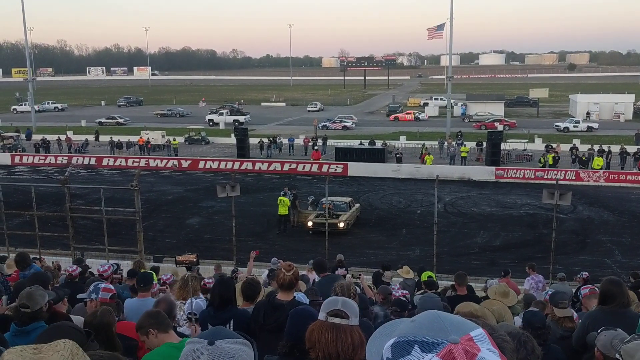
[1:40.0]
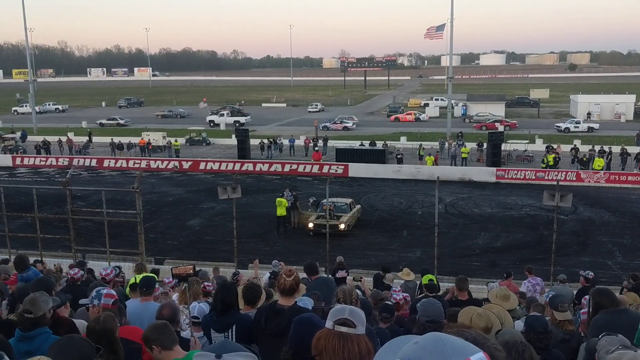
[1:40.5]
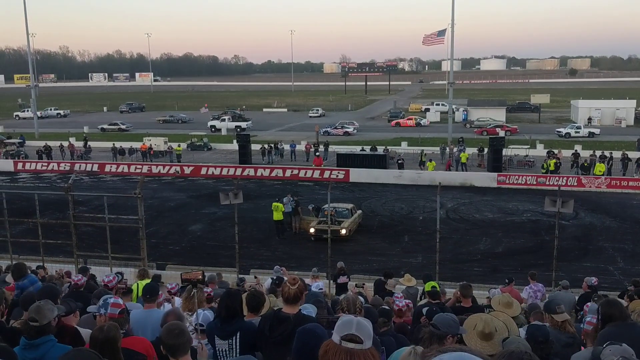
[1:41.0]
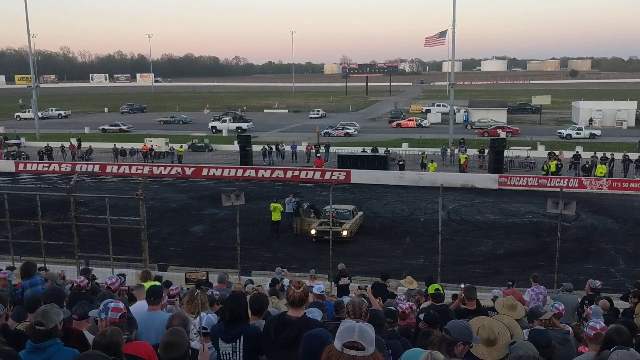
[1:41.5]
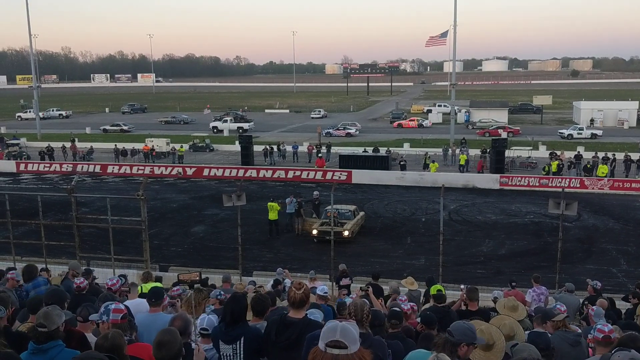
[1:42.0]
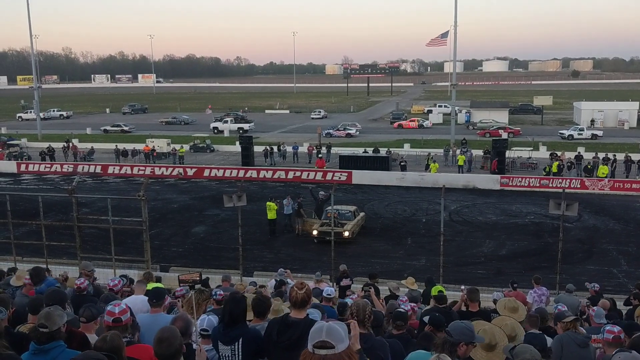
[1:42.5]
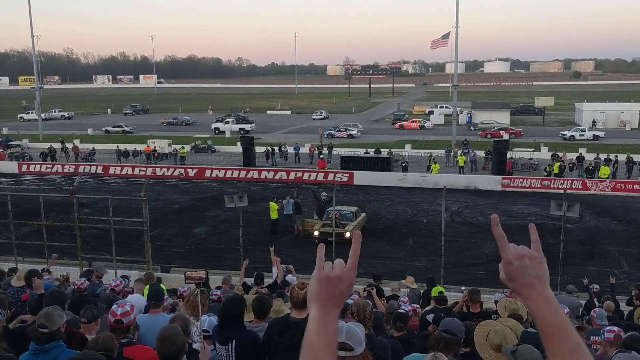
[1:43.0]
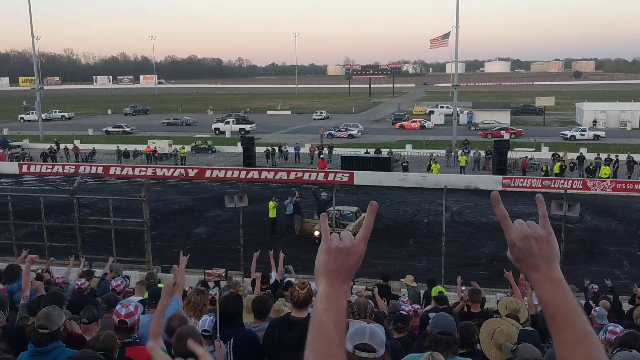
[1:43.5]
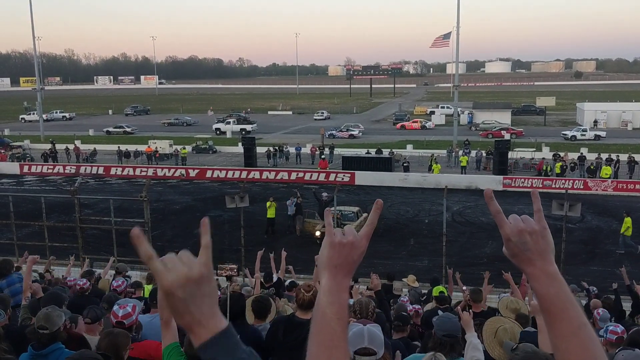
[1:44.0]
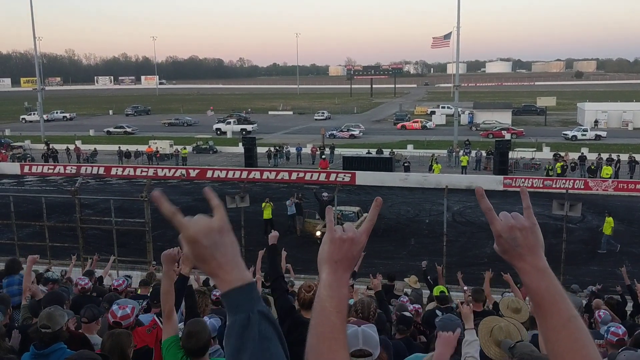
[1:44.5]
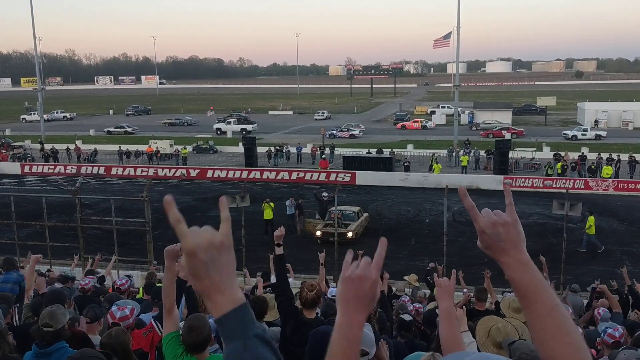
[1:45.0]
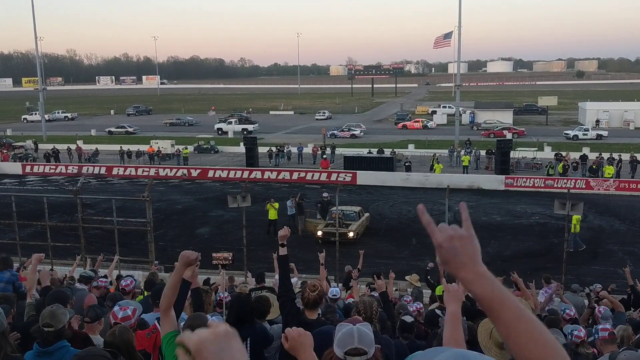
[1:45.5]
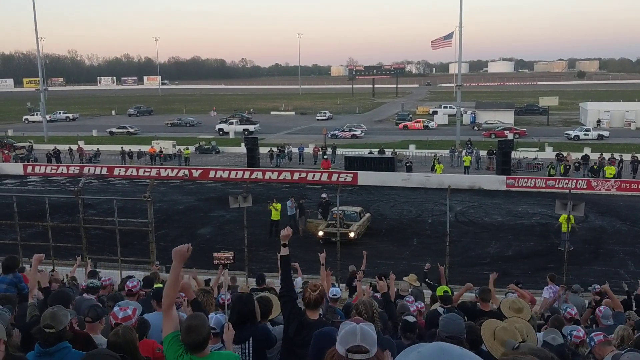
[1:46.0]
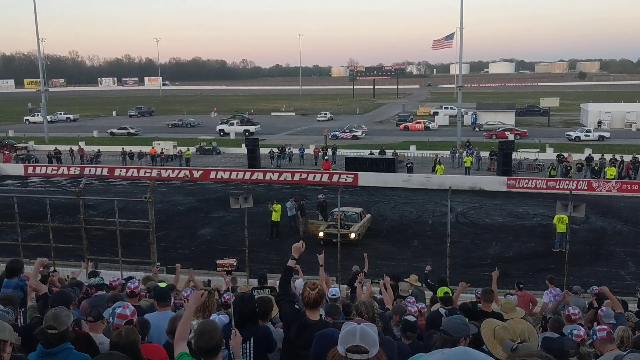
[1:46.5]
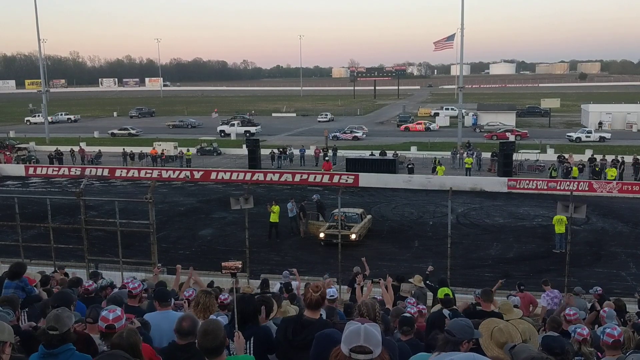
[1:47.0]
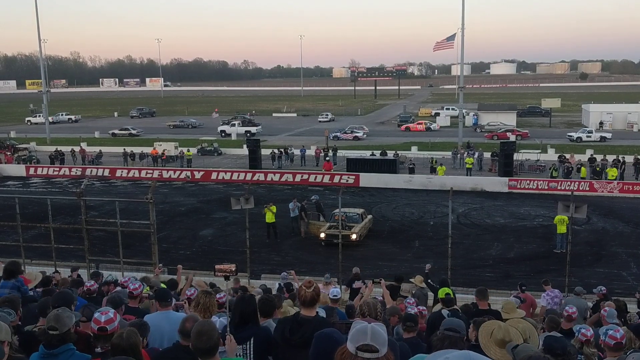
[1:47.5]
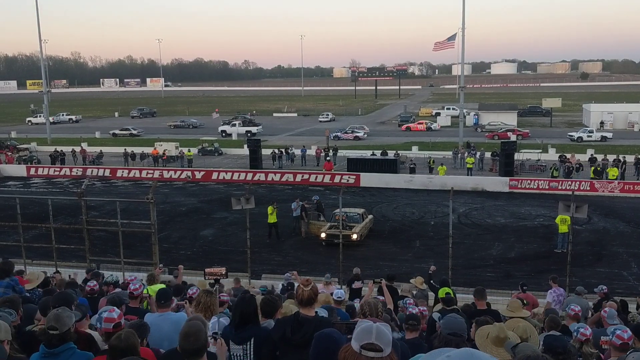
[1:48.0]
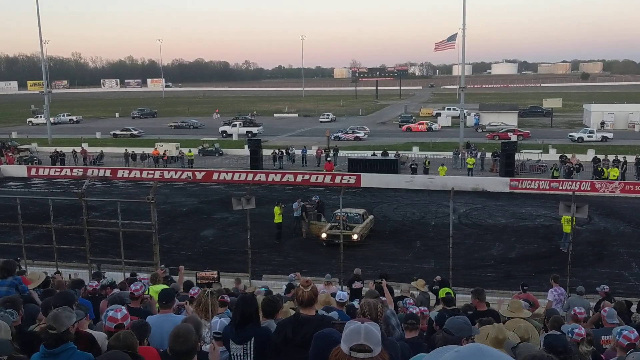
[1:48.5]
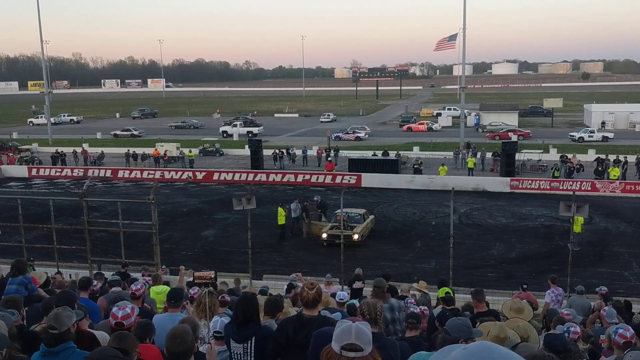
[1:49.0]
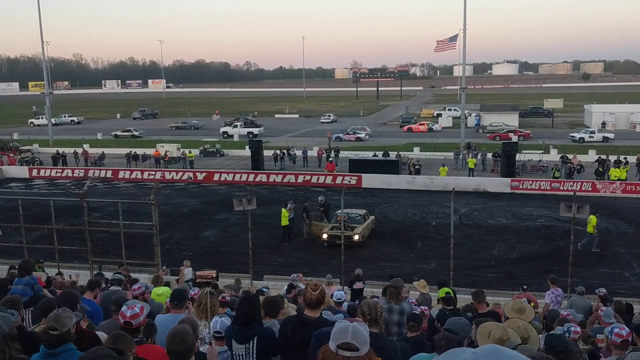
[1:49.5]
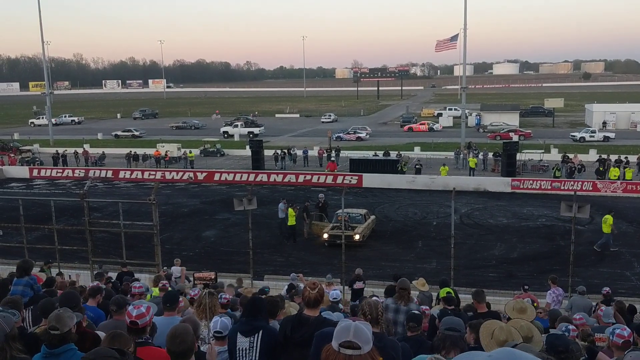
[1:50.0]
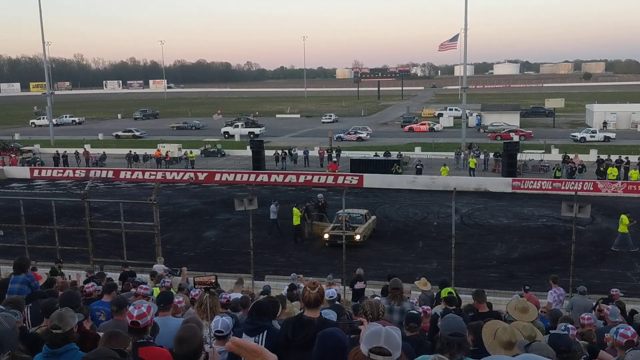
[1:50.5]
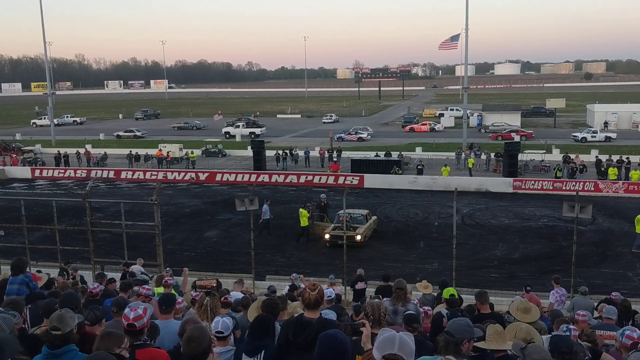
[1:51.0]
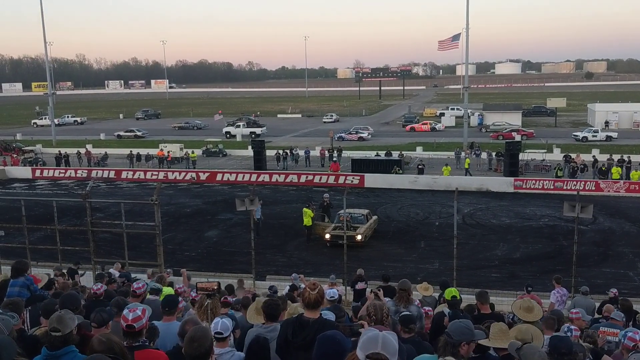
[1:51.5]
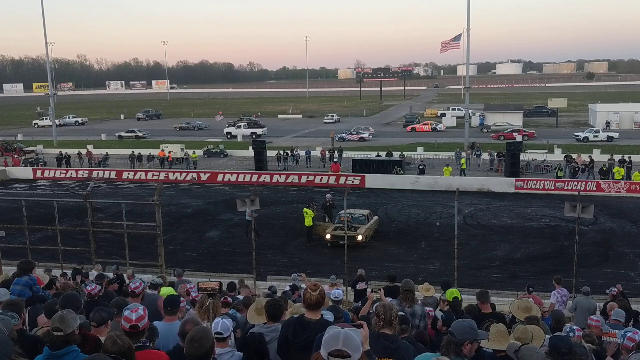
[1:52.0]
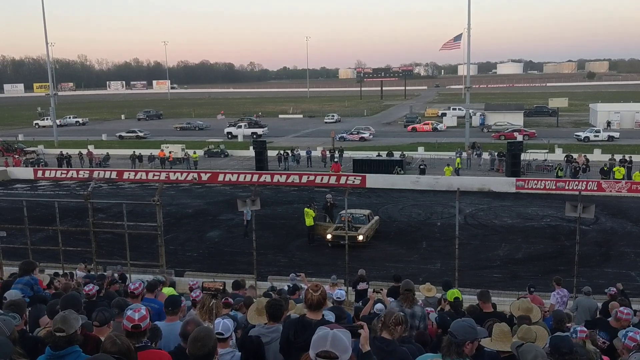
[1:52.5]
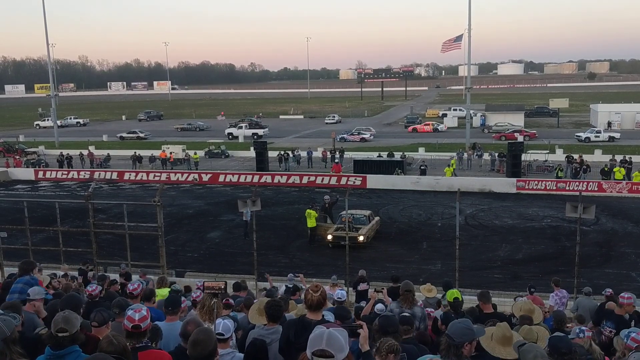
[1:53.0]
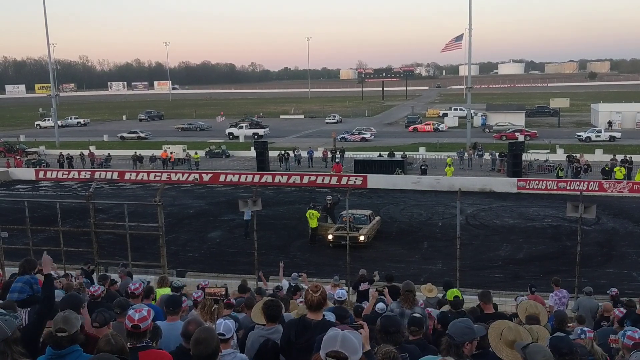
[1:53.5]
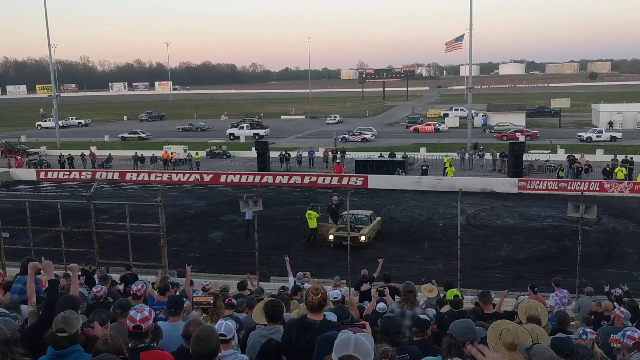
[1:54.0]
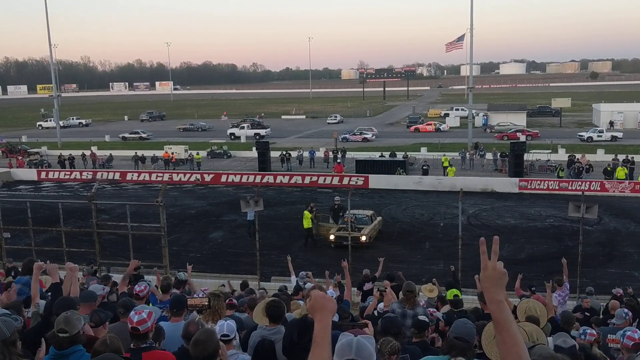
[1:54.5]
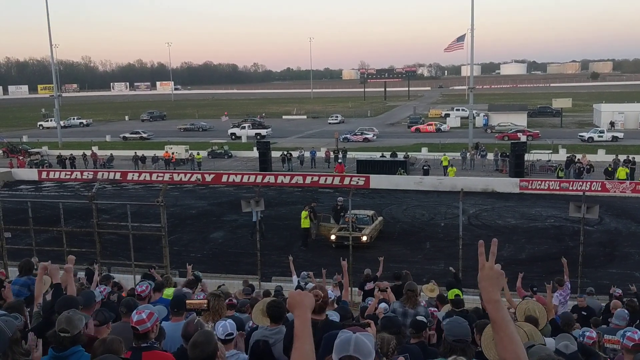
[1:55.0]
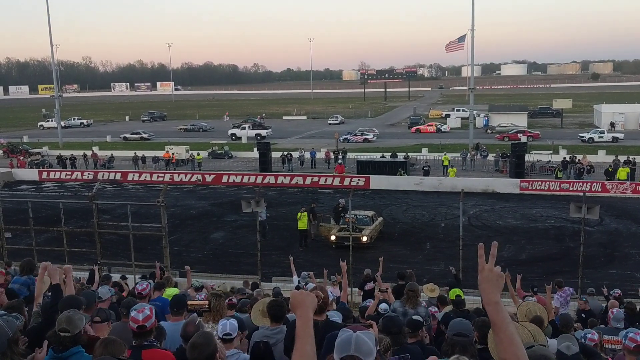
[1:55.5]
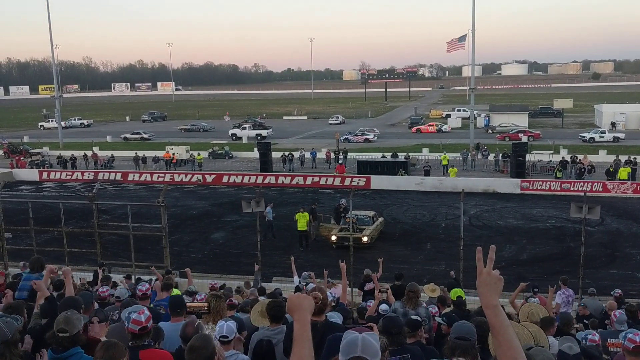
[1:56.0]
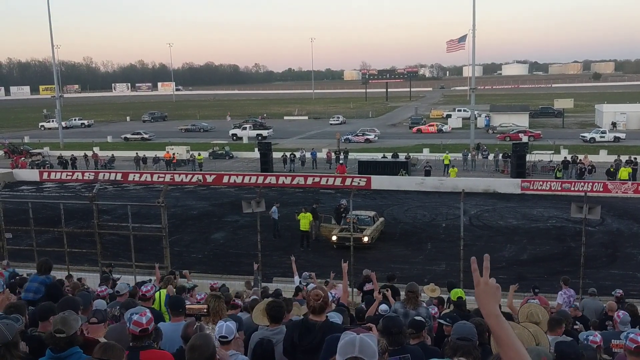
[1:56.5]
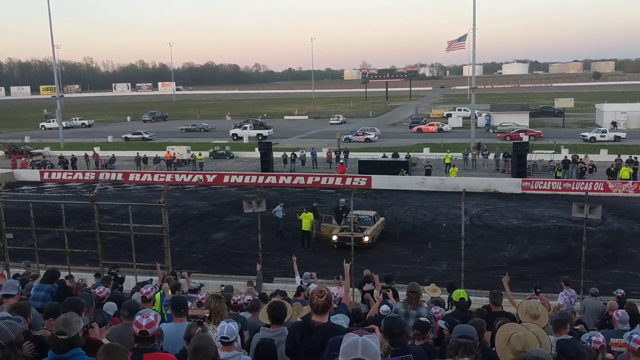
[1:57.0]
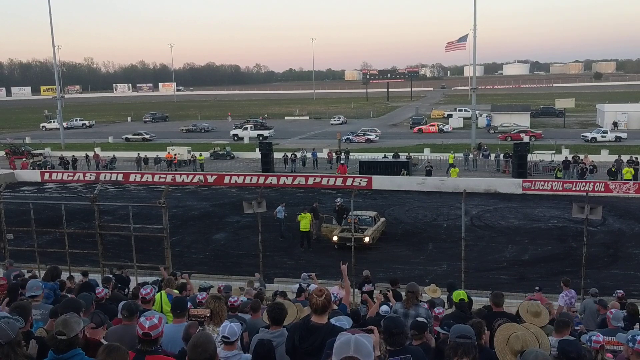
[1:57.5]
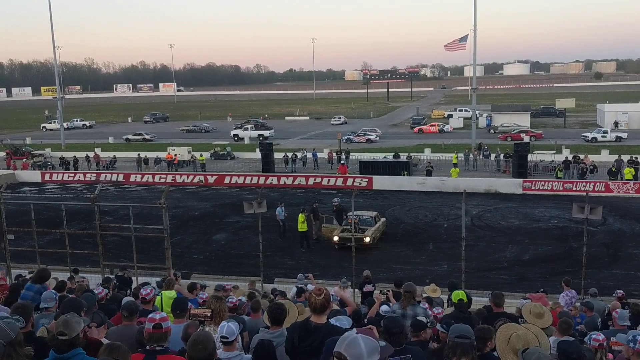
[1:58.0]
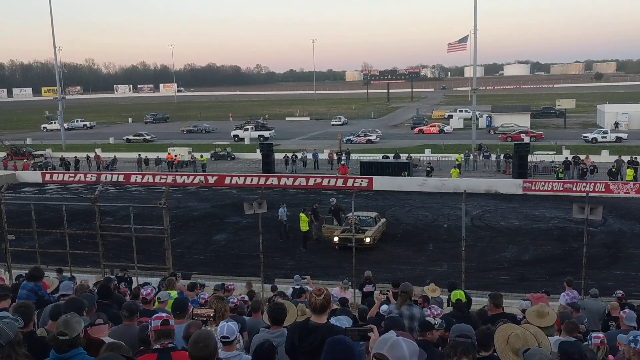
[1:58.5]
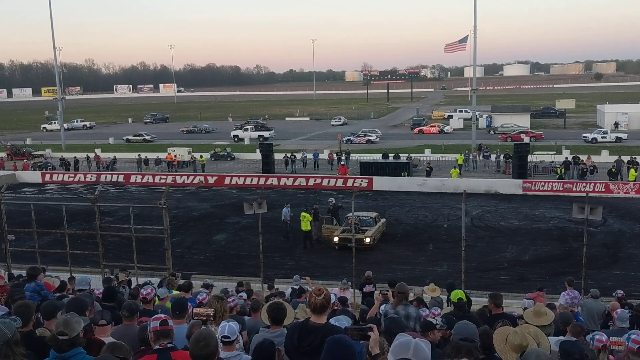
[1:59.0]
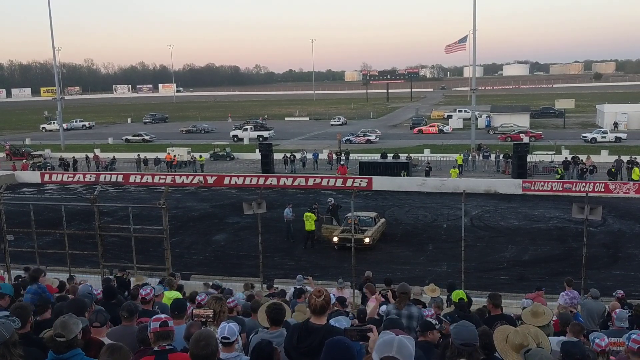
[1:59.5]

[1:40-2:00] The race circuit for cars continues to be shown, with an area around it for fans. There are perhaps hundreds or thousands of fans, some of whom are recording with their mobile phones. The location seems to be the United States of America, as a USA flag is posted on one of the pillars. The skies are clear and somewhat red, suggesting it is perhaps evening. On the circuit is the stationary yellow car, and a man wearing a white cap and a blue shirt comes out of it. As he comes out, numerous fans raise their hands in celebration and appreciation, some with their index finger and little finger pointing towards the sky. A few other individuals are next to the driver; one appears to have a loudspeaker of some form and is perhaps congratulating the driver.